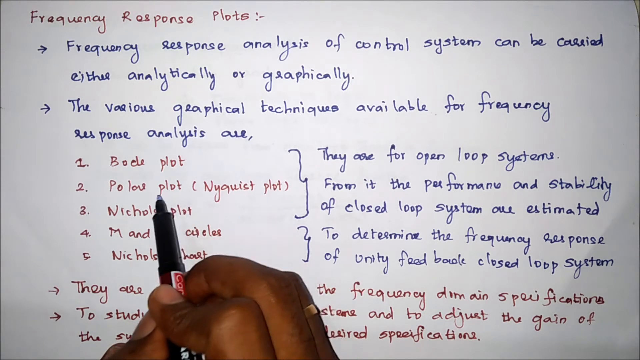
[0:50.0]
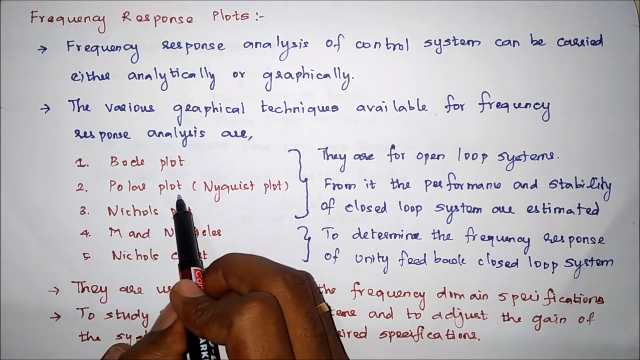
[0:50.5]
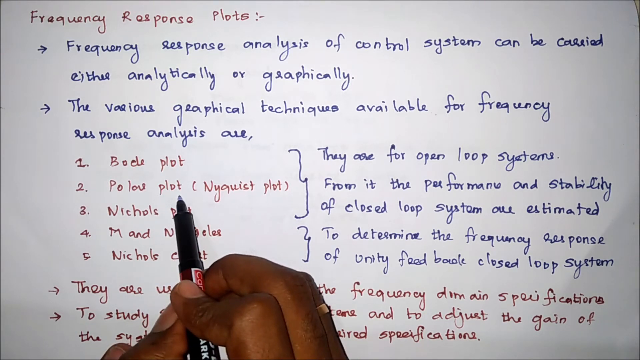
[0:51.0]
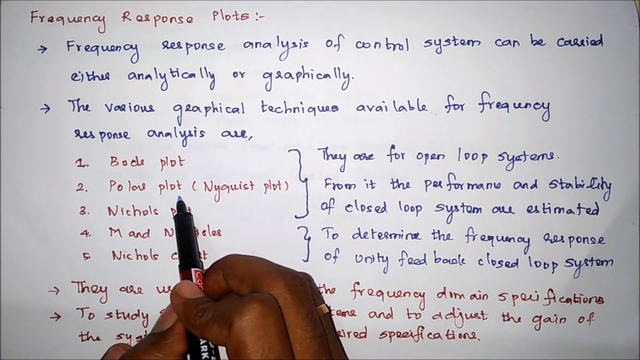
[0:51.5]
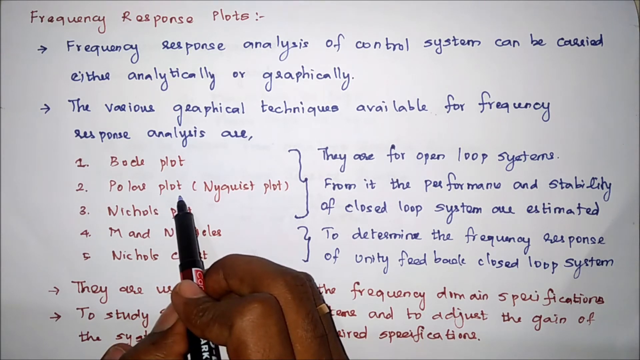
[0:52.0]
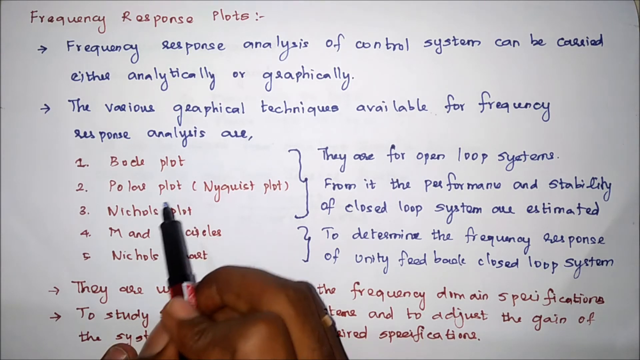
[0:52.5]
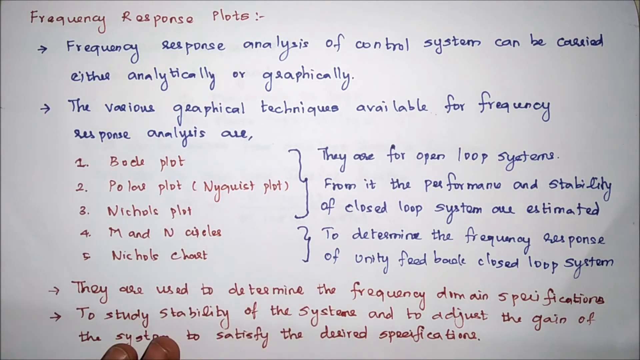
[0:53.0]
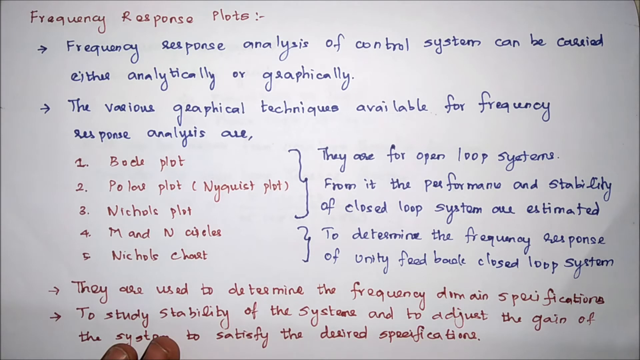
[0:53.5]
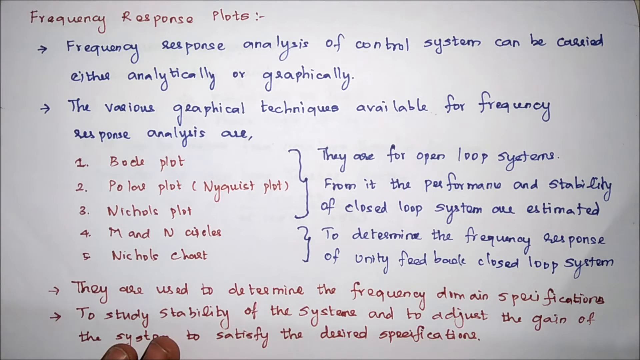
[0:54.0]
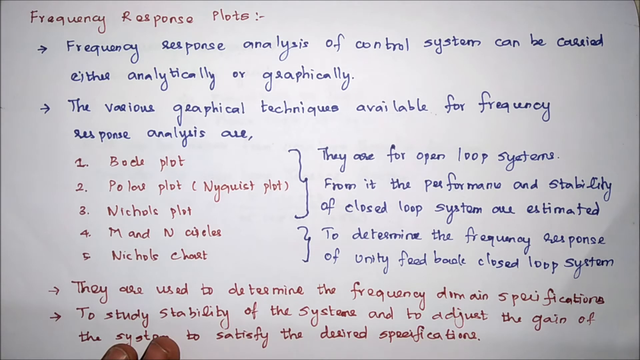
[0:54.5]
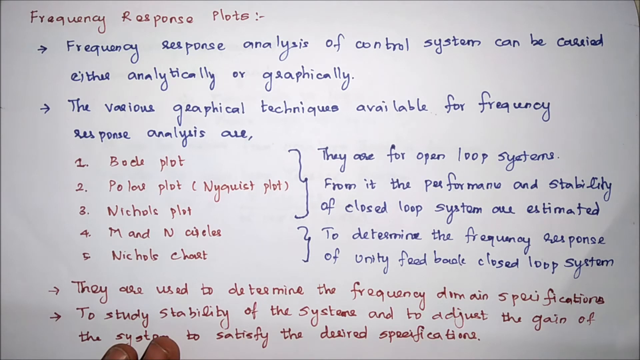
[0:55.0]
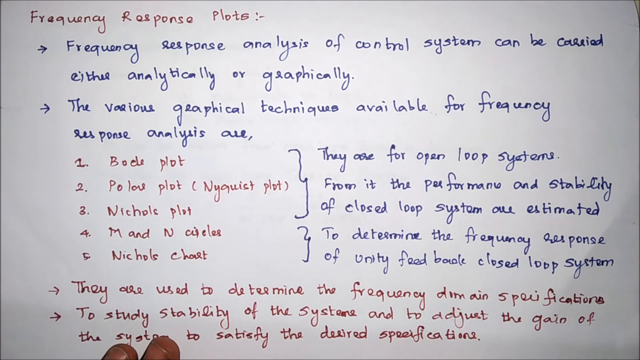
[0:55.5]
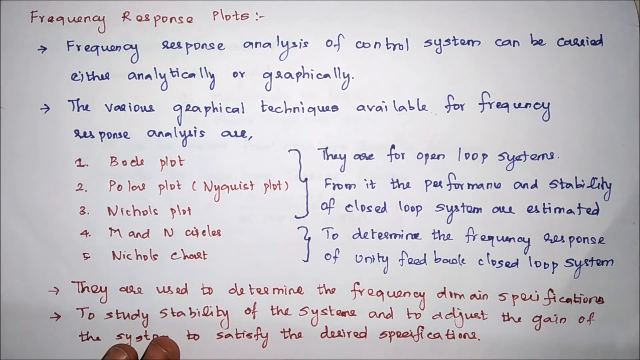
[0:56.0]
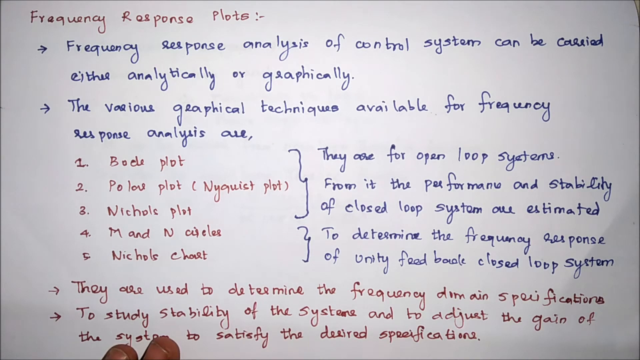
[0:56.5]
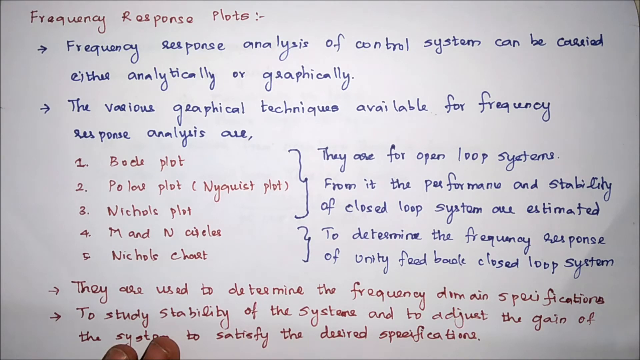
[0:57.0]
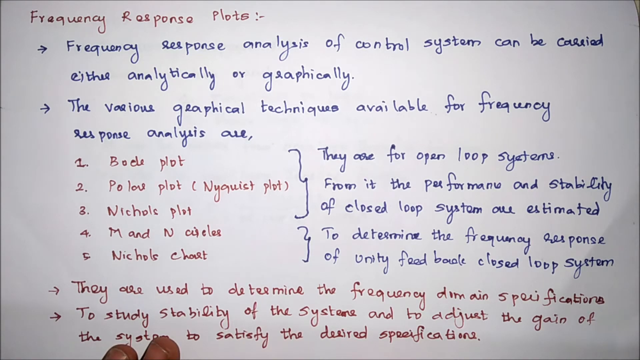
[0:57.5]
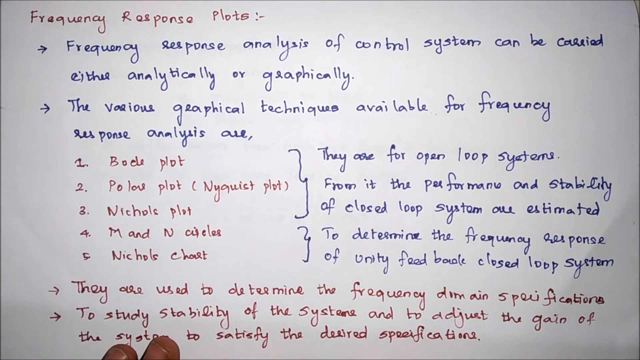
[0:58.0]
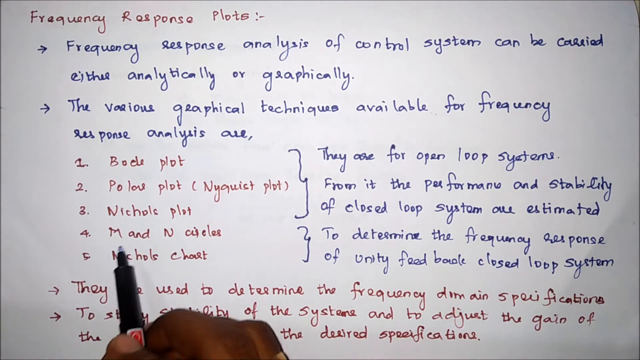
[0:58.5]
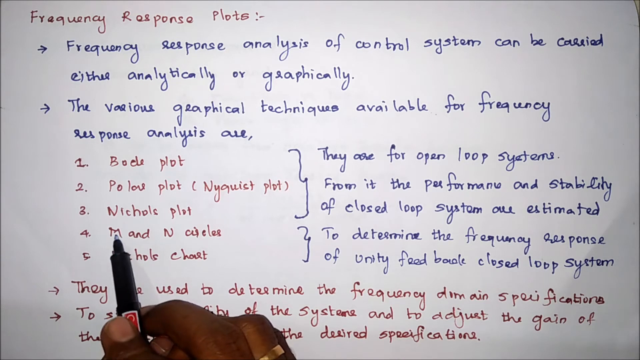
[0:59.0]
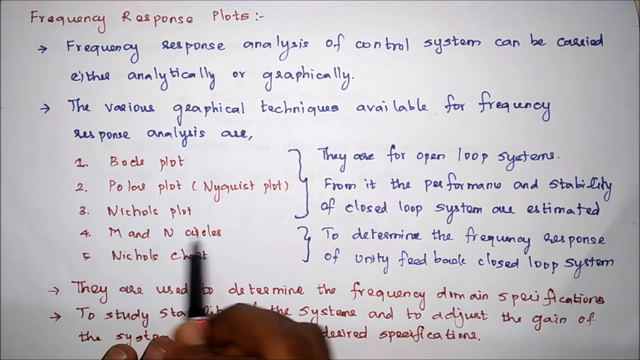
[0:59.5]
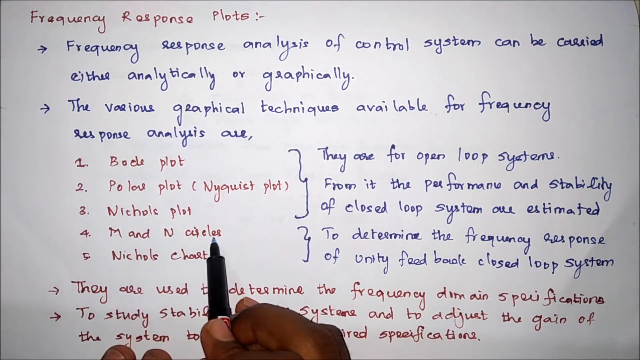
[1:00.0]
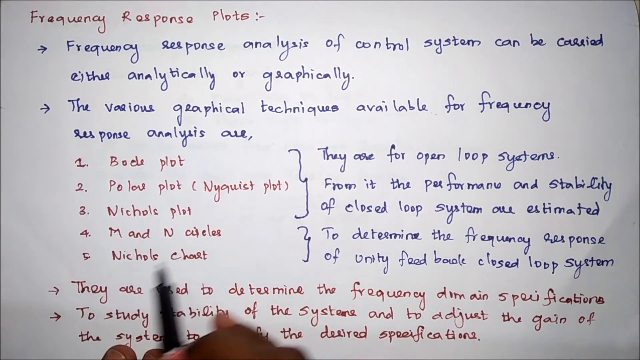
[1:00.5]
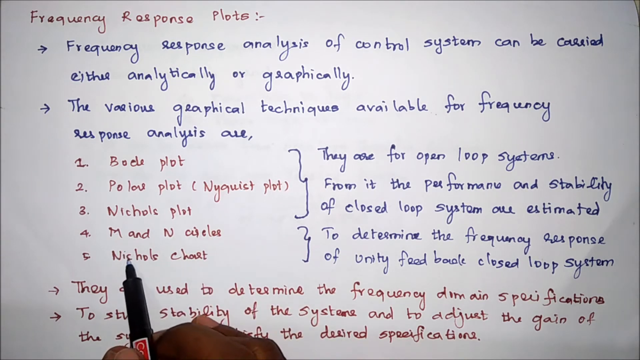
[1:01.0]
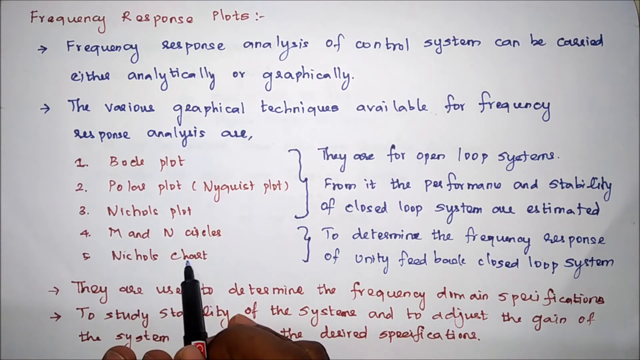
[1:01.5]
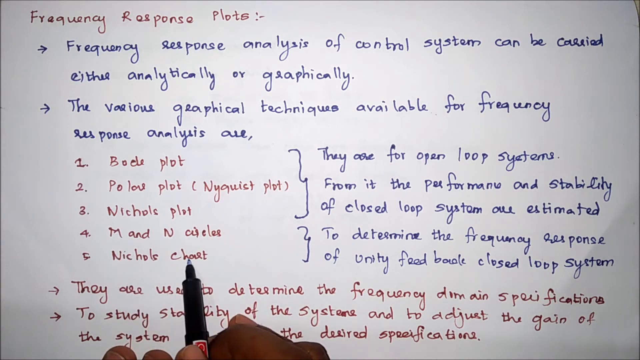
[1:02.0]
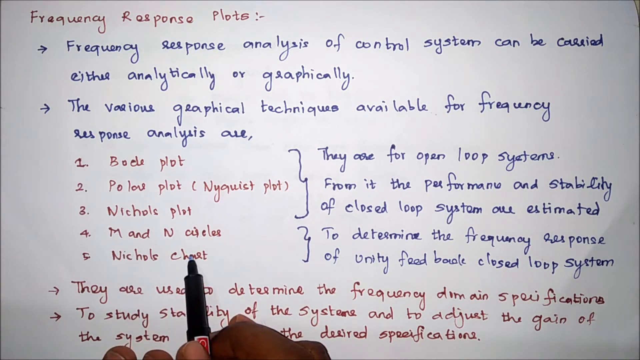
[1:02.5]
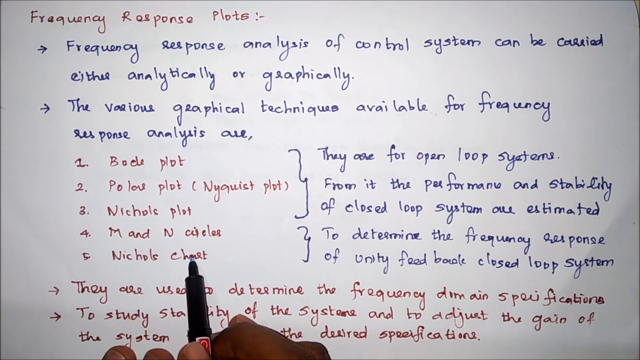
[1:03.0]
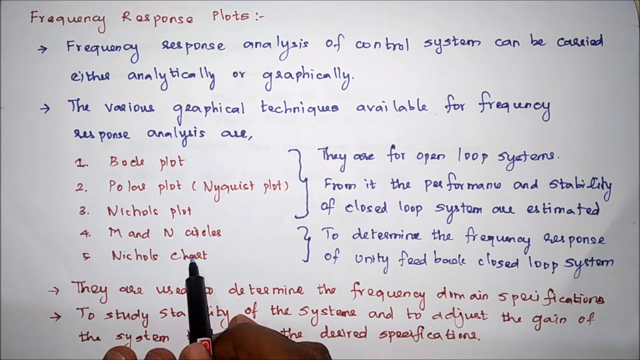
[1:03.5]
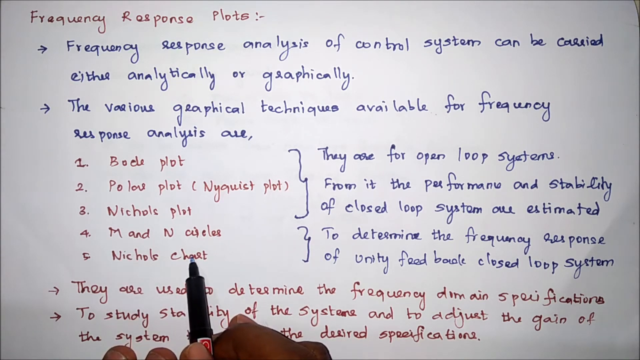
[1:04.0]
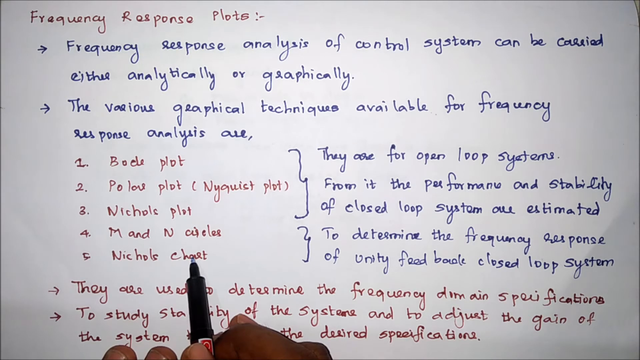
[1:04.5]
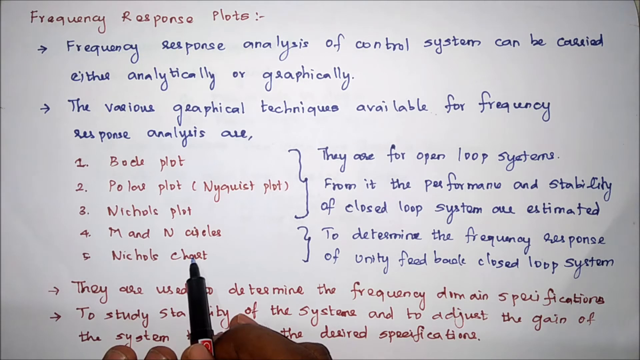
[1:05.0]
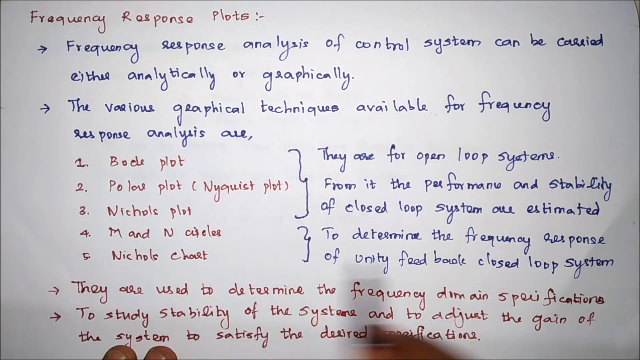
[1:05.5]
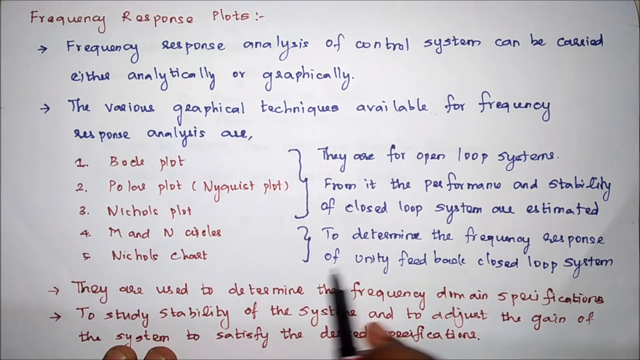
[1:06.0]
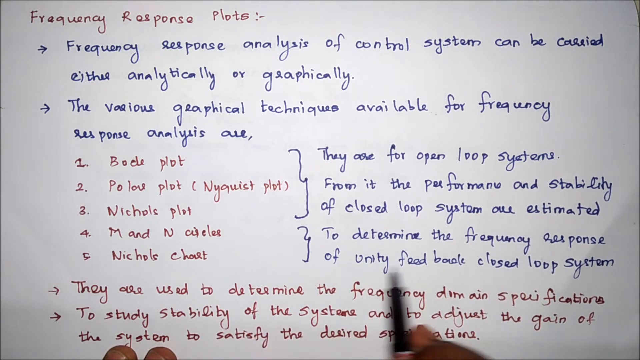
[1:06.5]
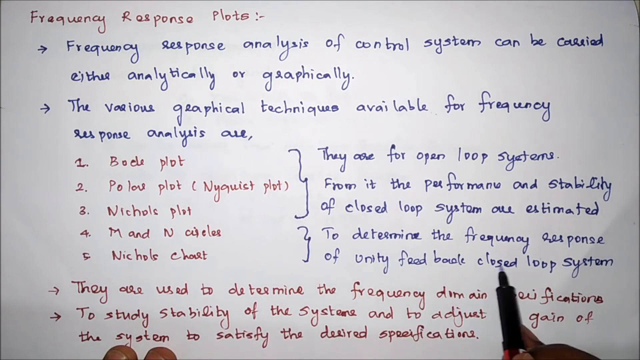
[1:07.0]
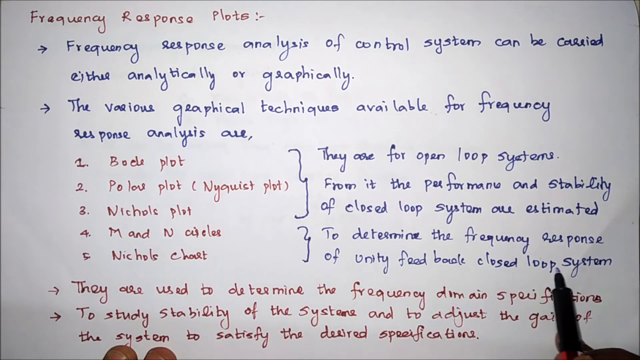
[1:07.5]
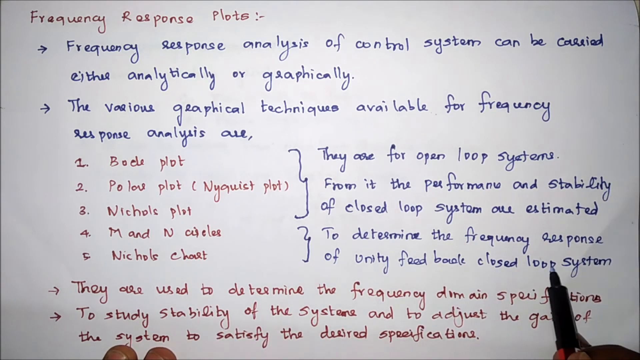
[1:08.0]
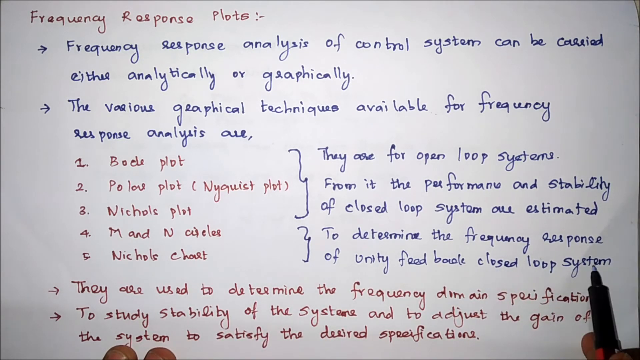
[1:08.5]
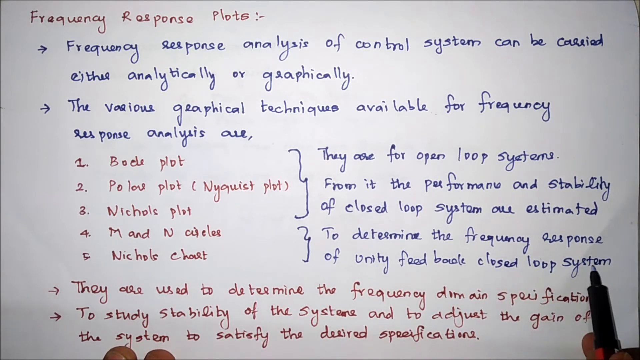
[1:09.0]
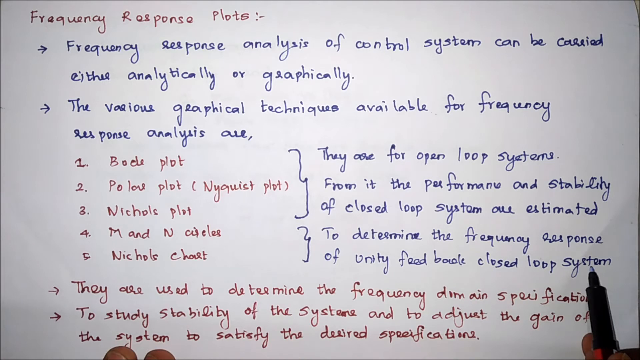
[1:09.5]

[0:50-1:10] The hand hovers over the page, where some words are written in red ink and others in blue ink. The lecturer or tutor focuses on a list, apparently of different plots, numbered one through five. The first item appears to say "Bode plot", the second "POLOU plot", the third "Nicholas plot", the fourth "M&L circles" and the last "Nicholas chaste". The hand then moves away completely, comes back, points at "Nicholas chaste", and points to the blue writing directly across from it.